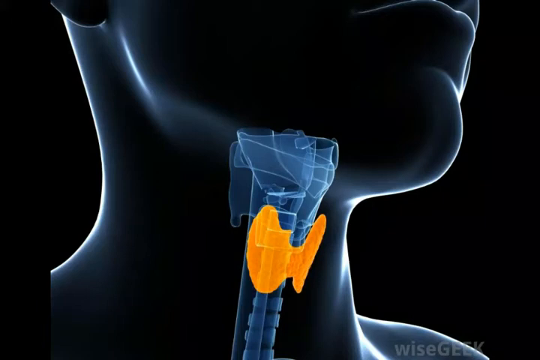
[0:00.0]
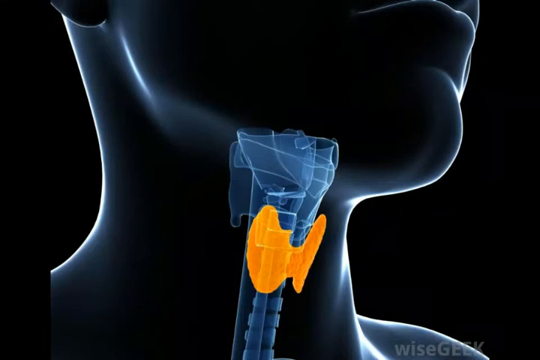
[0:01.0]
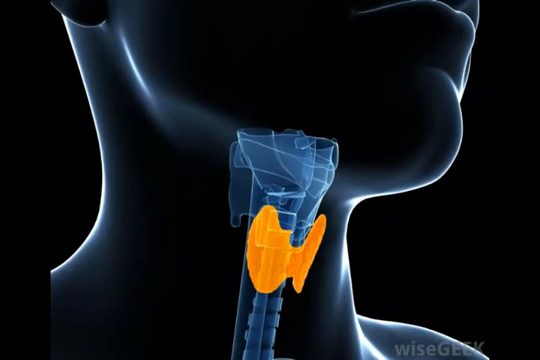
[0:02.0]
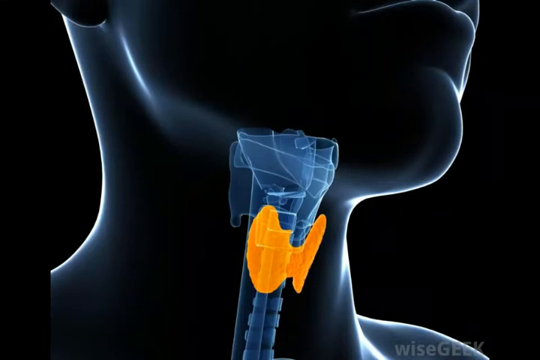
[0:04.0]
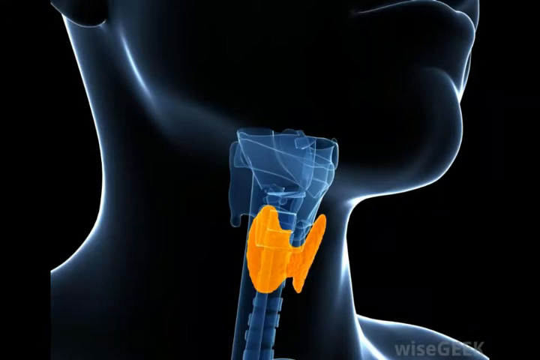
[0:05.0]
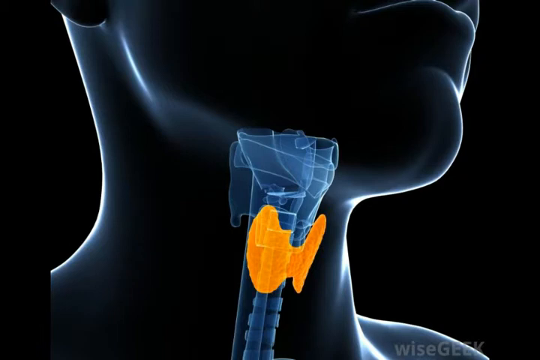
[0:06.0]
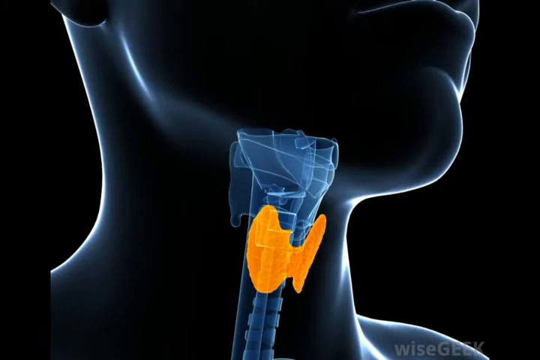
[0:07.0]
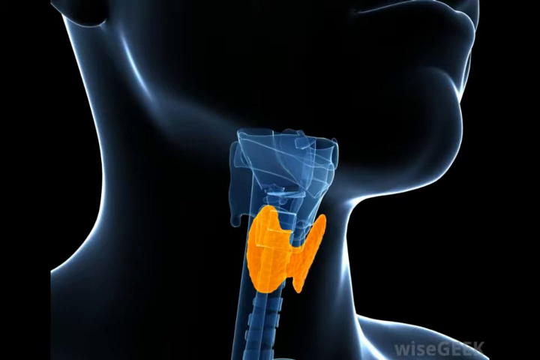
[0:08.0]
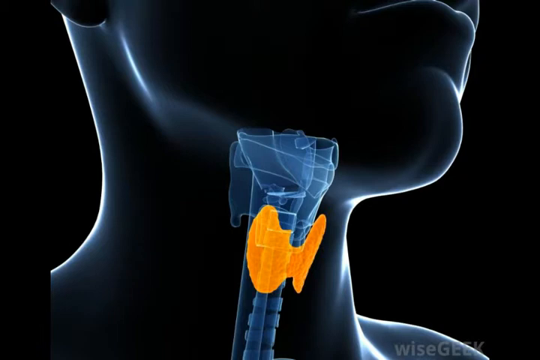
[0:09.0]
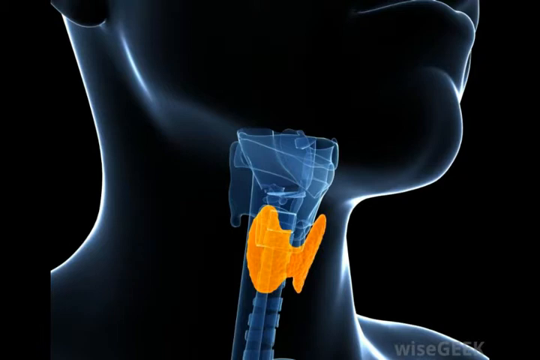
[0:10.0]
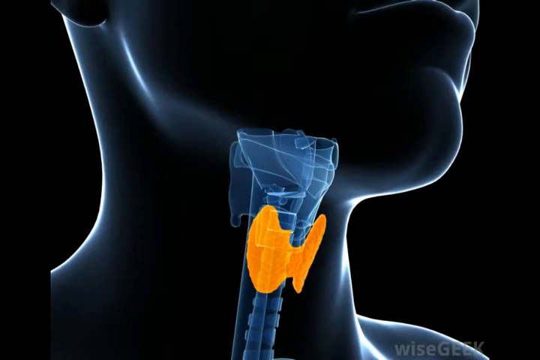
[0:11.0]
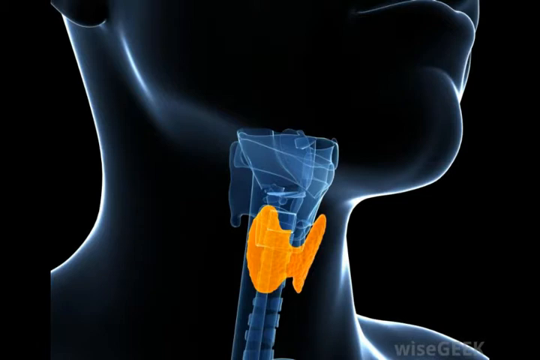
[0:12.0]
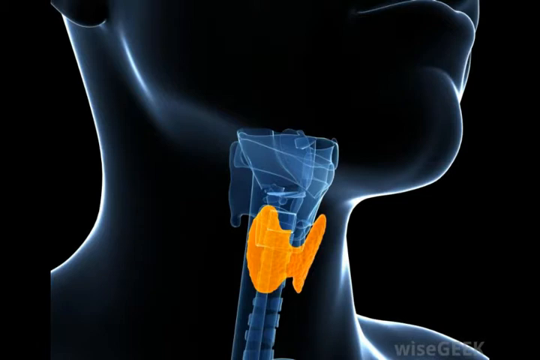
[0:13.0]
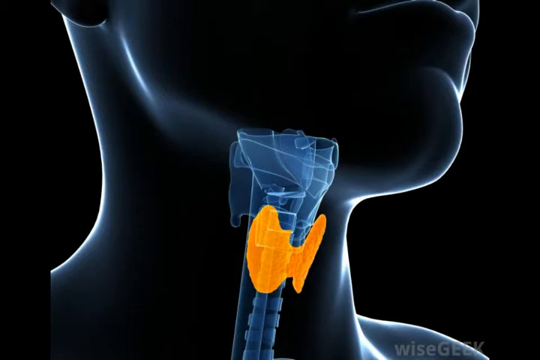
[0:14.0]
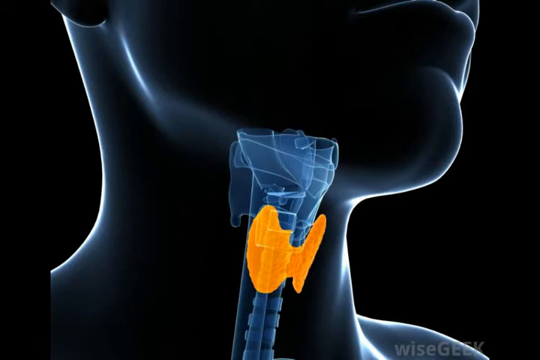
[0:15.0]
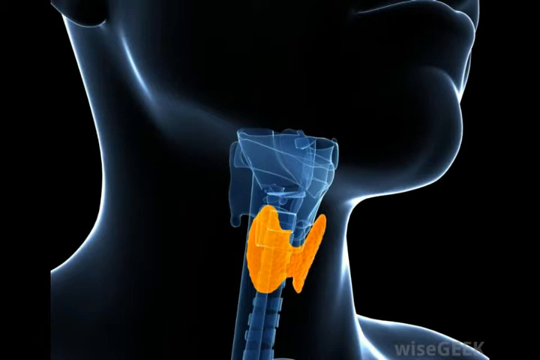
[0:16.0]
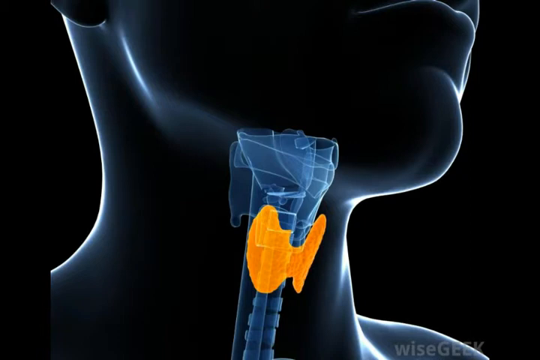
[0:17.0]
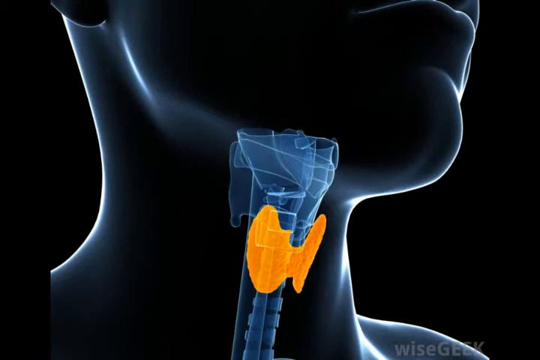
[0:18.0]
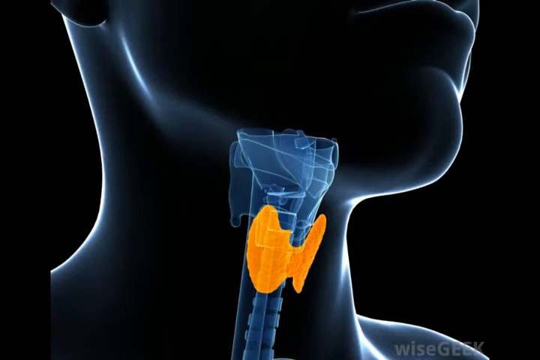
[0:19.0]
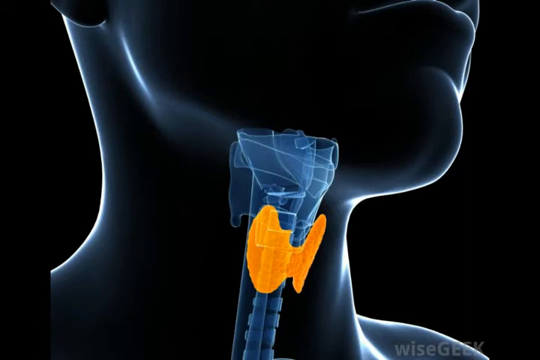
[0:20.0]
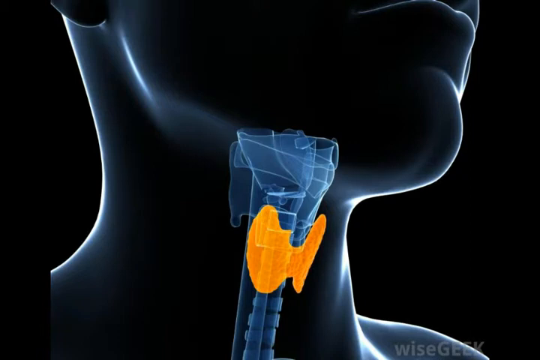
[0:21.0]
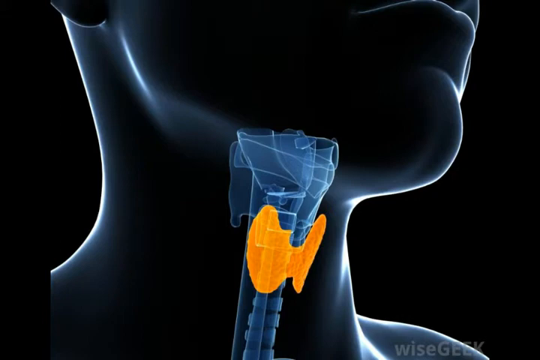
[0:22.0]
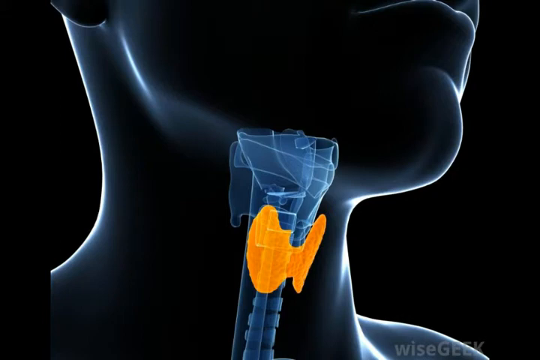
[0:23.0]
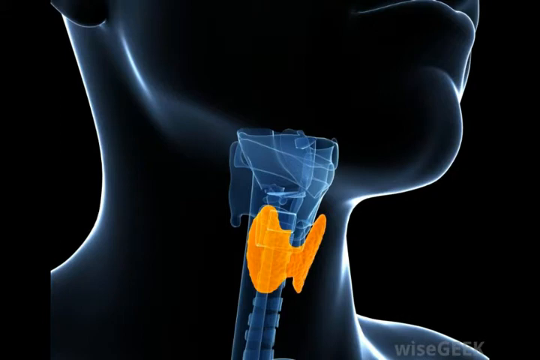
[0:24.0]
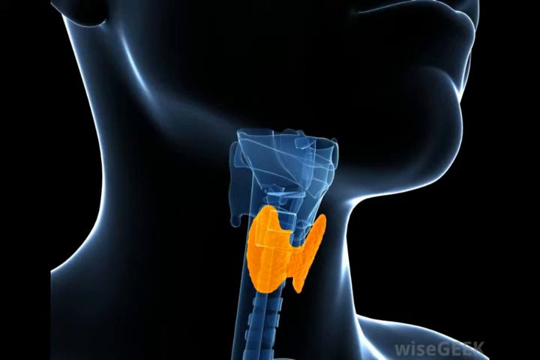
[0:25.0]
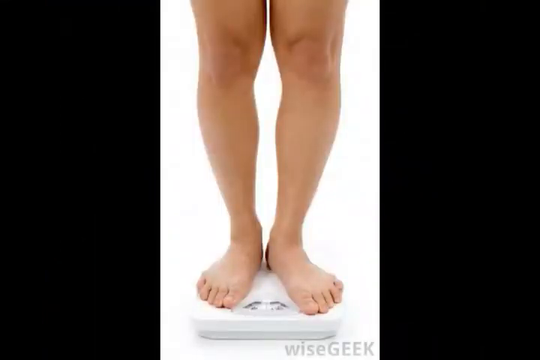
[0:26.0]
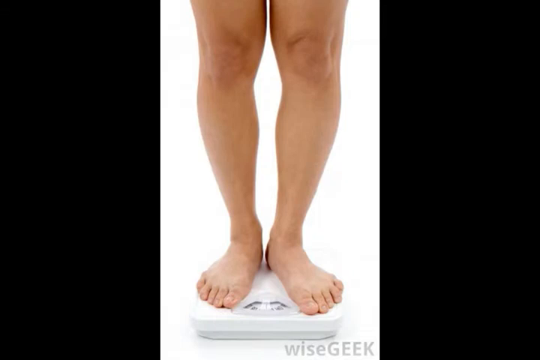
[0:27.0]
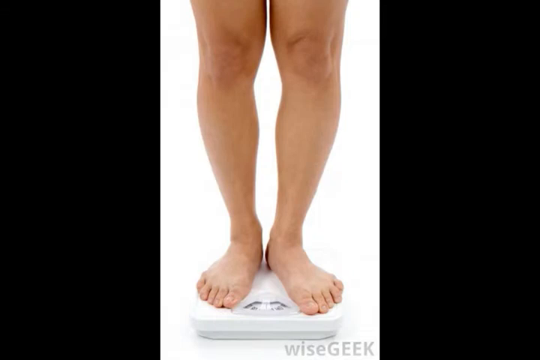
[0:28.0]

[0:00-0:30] A sci-fi stylized artwork shows the lower part of a human head, mainly focusing on the throat; the head is possibly male. The art mainly shows highlights of light reflecting on the face, but it is mostly line art, revealing a little of the outline of the lips, the curvature of the chin, the shape of the back of the neck, the ears and the neck. An almost x-ray-like view shows the esophagus and breathing apparatus. An orange highlighted area, apparently corresponding to the thyroid gland, glows bright orange in the diagram. After this shot, a pair of bare legs stands on a set of scales against a white backdrop.